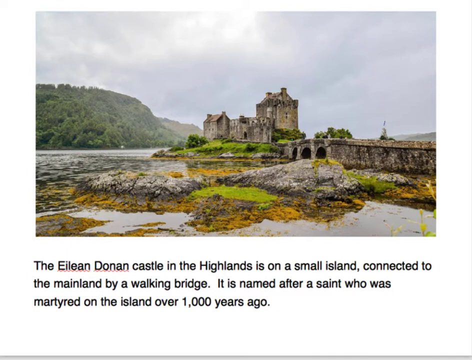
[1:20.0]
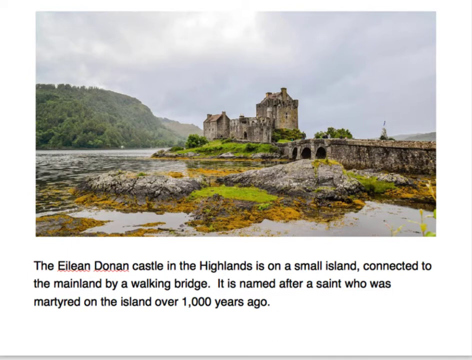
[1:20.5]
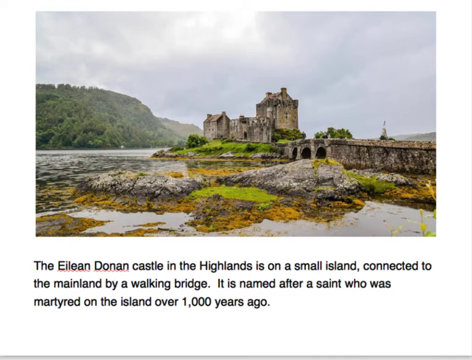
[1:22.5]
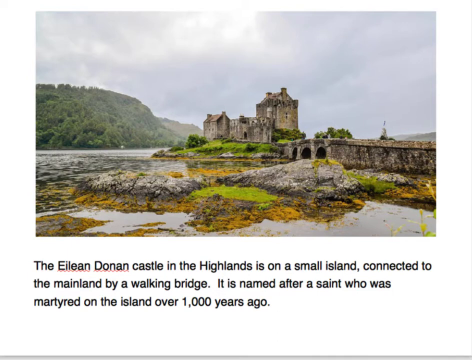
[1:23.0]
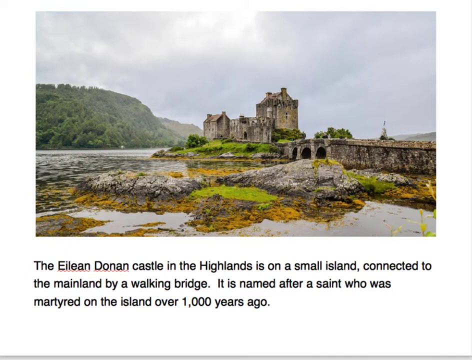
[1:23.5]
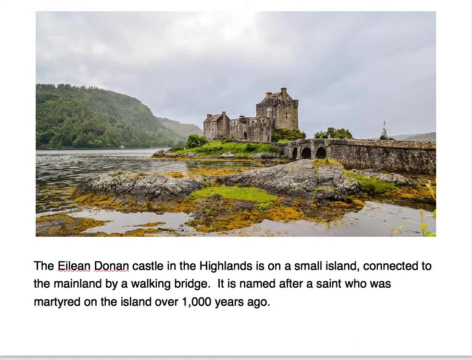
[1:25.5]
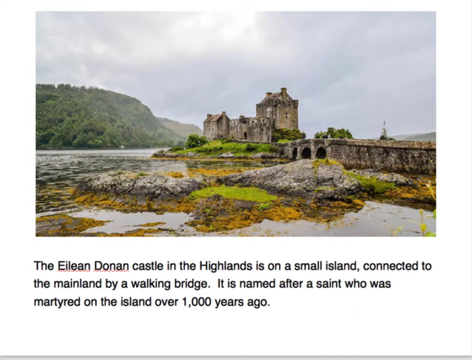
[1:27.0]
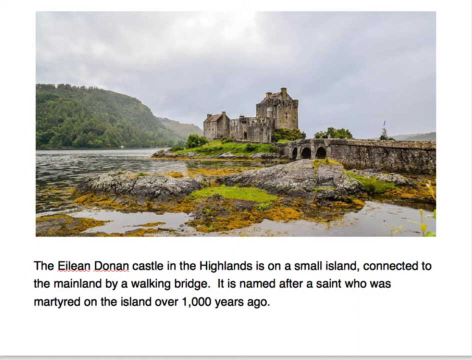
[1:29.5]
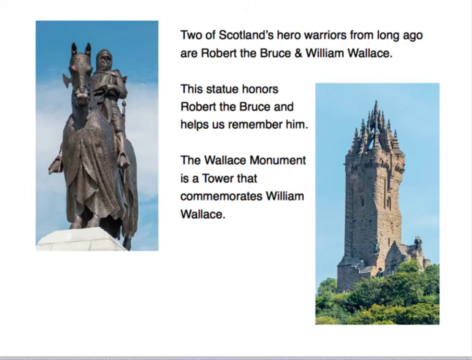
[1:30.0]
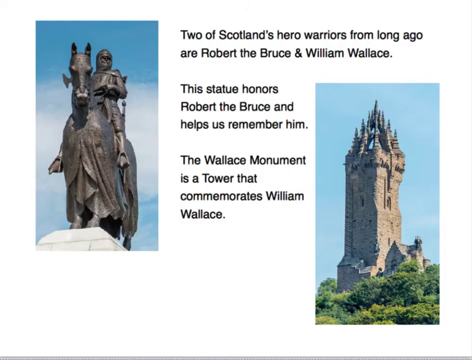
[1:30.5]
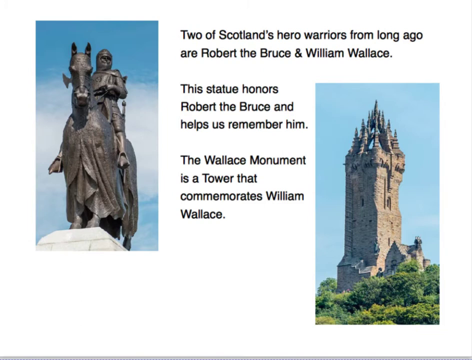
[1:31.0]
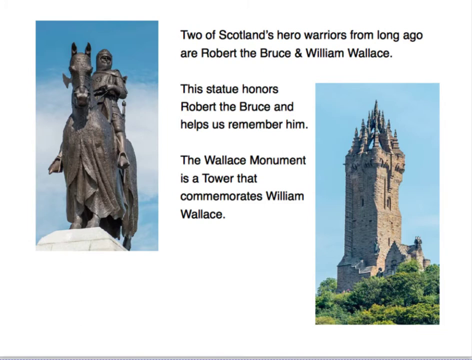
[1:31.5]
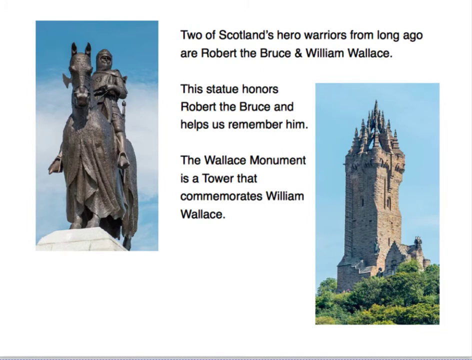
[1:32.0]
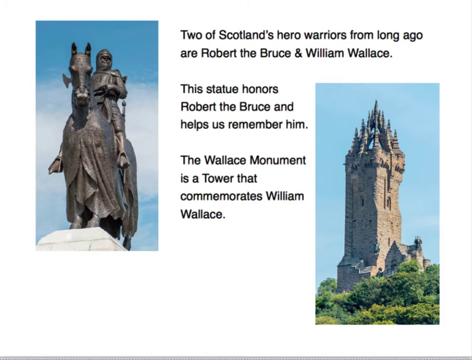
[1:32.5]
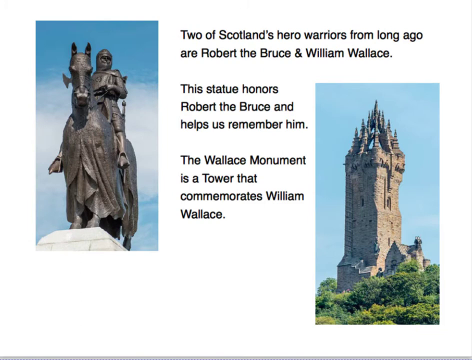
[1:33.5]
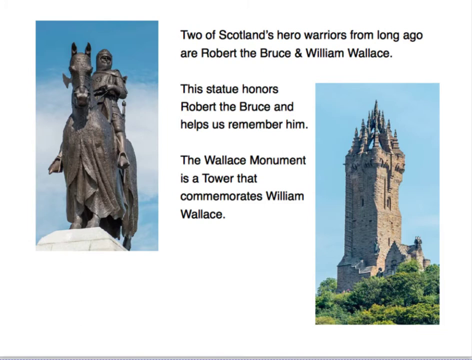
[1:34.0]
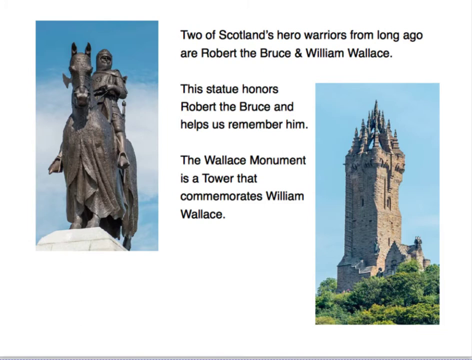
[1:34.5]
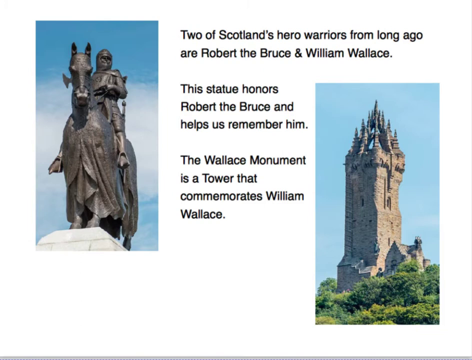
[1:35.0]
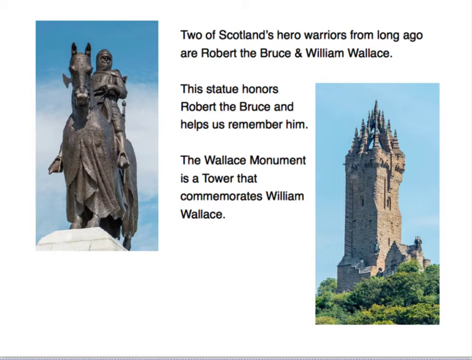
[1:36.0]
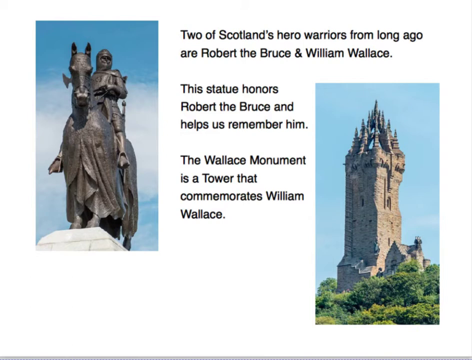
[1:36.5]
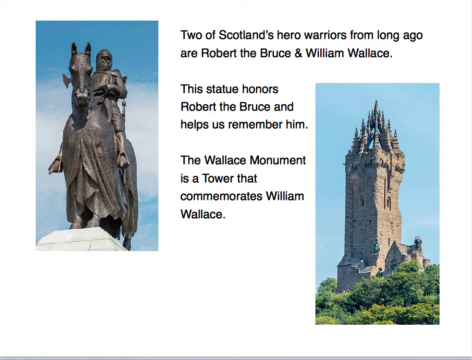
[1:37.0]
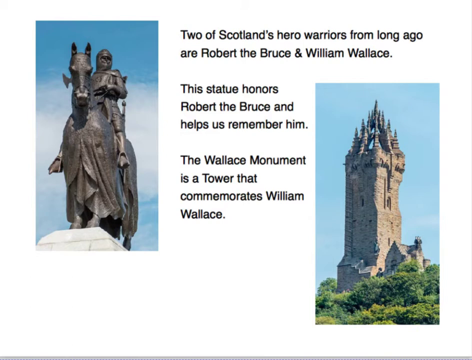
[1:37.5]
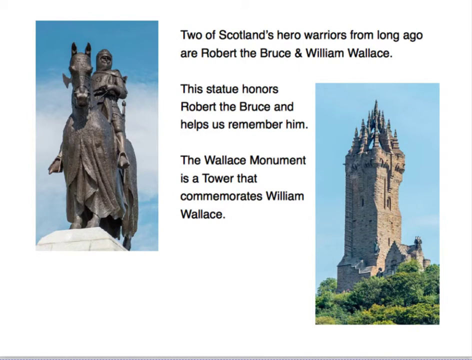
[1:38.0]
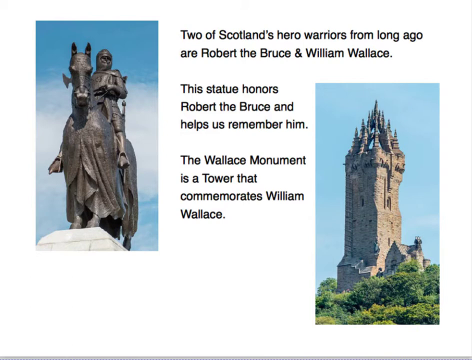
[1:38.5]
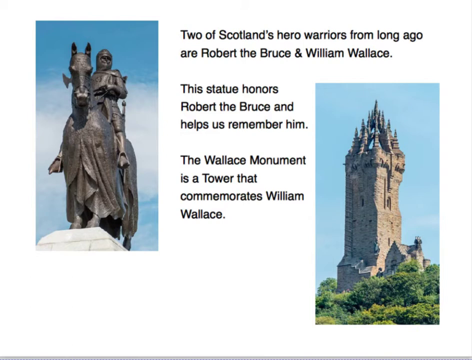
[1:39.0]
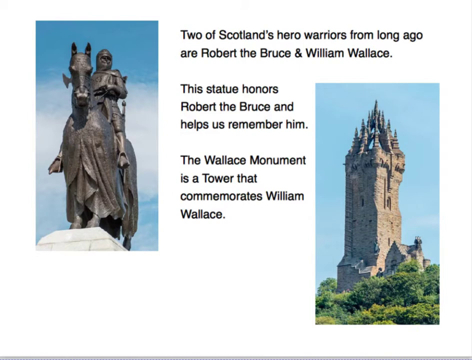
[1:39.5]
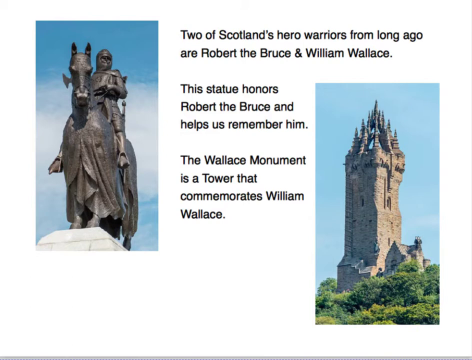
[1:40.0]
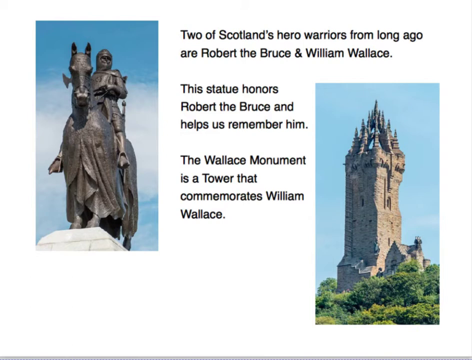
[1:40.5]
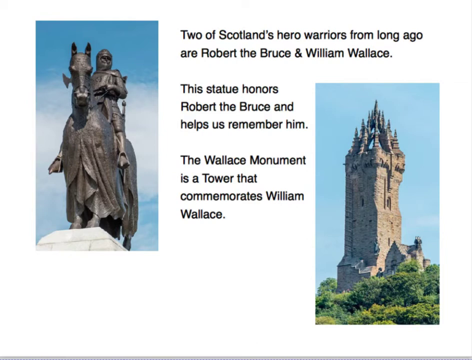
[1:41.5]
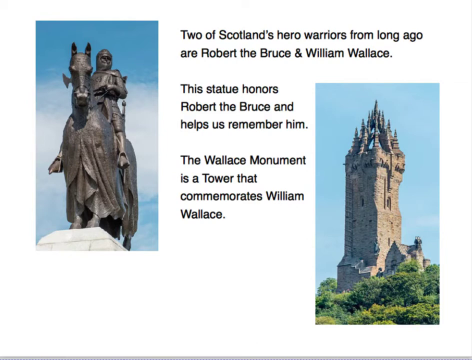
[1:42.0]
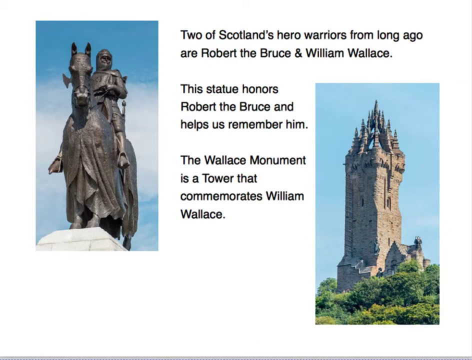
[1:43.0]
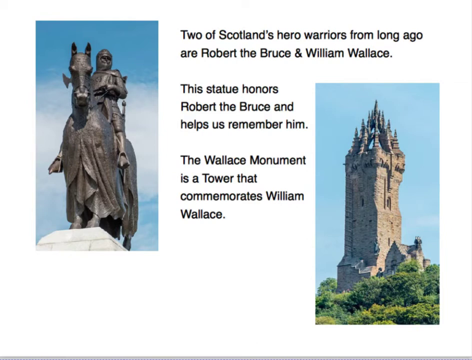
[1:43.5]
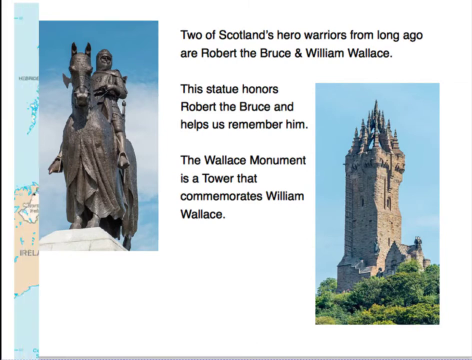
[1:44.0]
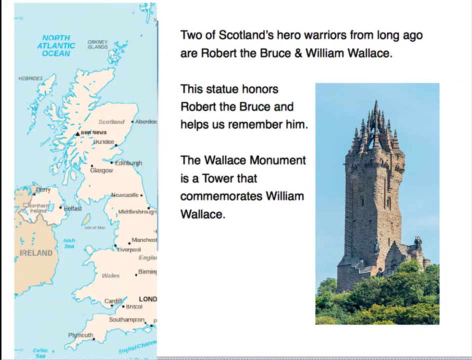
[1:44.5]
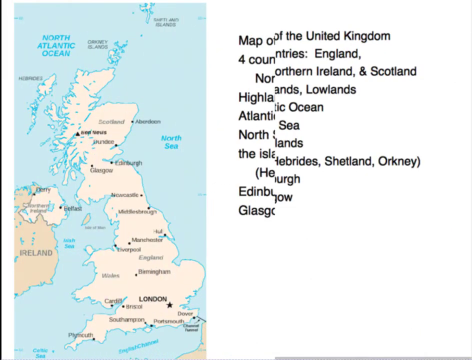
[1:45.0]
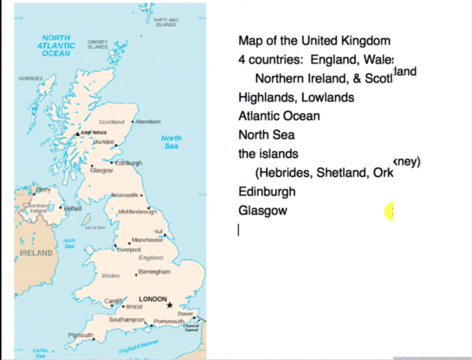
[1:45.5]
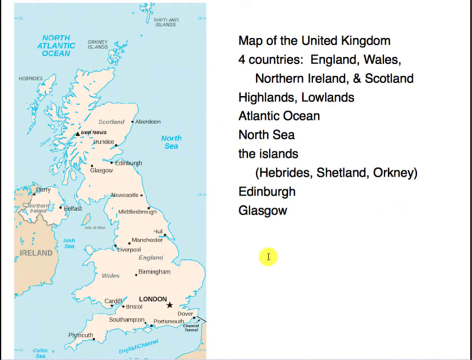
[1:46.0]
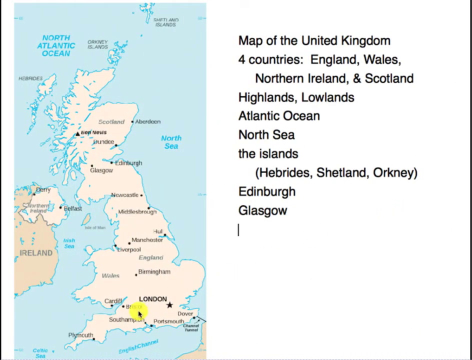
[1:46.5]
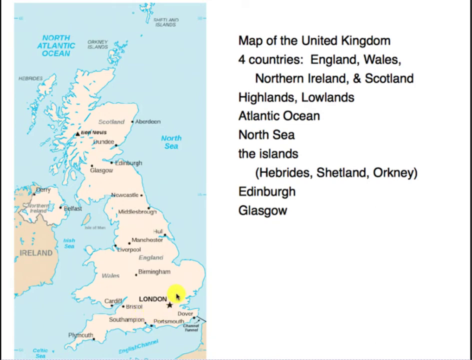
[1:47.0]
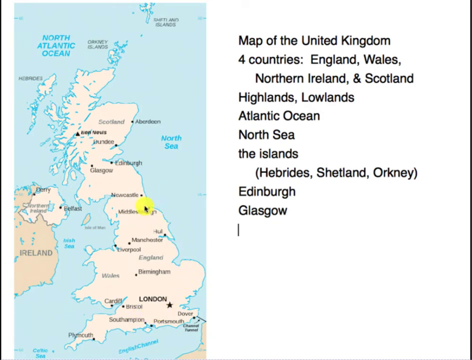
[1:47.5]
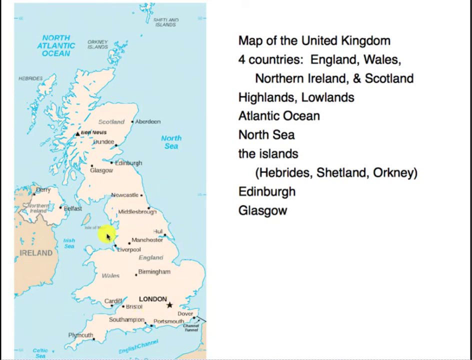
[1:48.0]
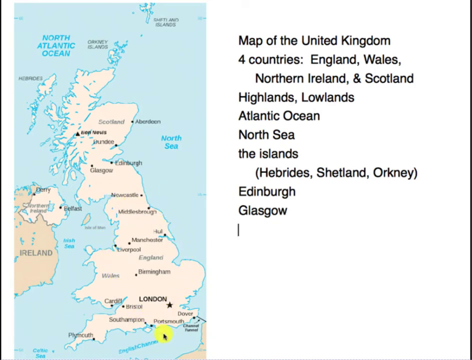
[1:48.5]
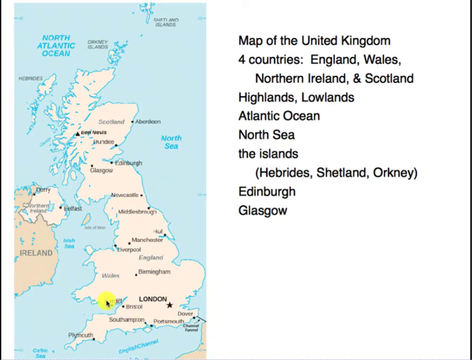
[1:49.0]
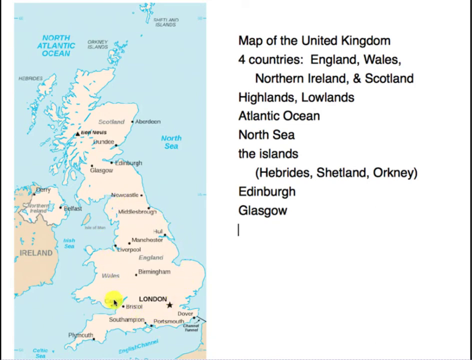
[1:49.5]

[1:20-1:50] A mountainous background appears, with a castle in front that looks old, run down and very historical. In the body of water in front are rocks, moss and marsh. The text at the bottom reads, "The Eileen Donan Castle in the Highlands is on a small island connected to the mainland by a walking bridge. It is named after a saint who was martyred on the island over a thousand years ago." Next come two images: on the left, a statue of a knight on a horse, and on the right, a tall castle-shaped monument, with blue skies and green trees in front and behind it. The text on screen reads, "Two of Scotland's hero warriors from long ago are Robert the Bruce and William Wallace. This statue honors Robert the Bruce and helps us remember him. The Wallace Monument is a tower that commemorates William Wallace." The slideshow then moves to a map of the United Kingdom and the four countries included.